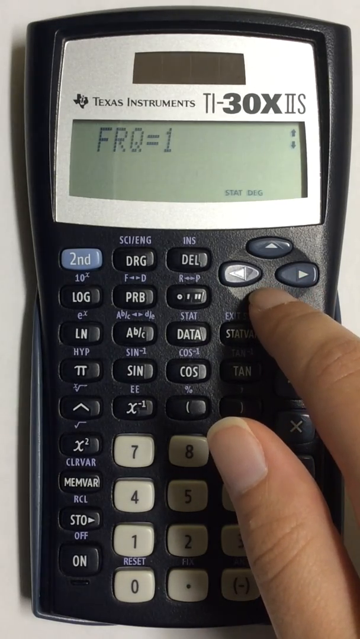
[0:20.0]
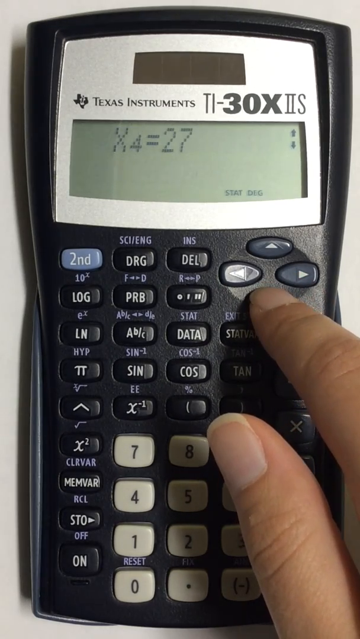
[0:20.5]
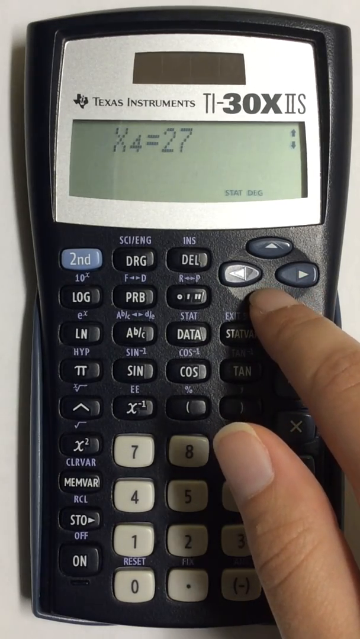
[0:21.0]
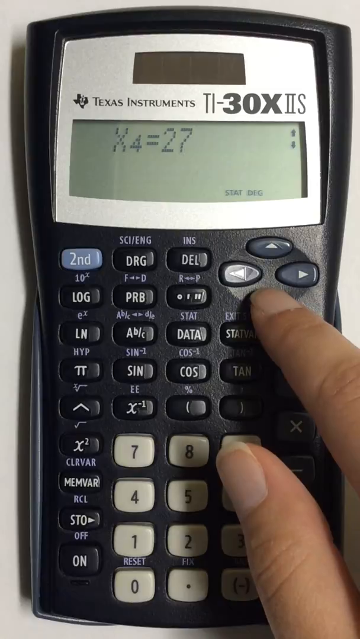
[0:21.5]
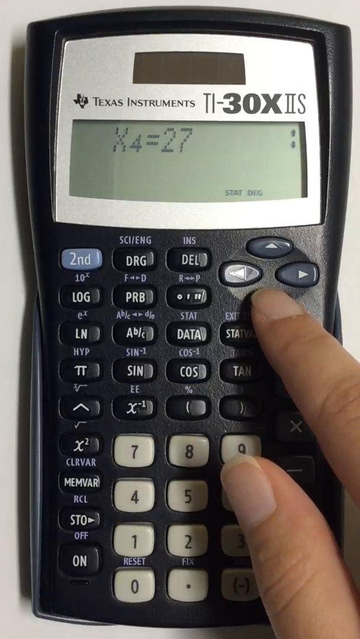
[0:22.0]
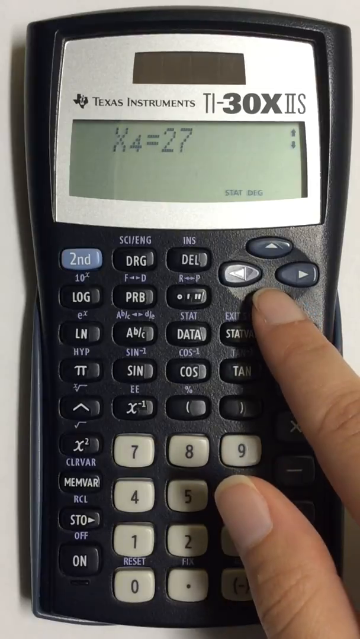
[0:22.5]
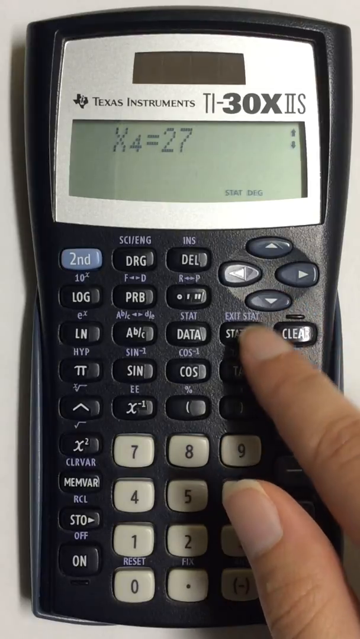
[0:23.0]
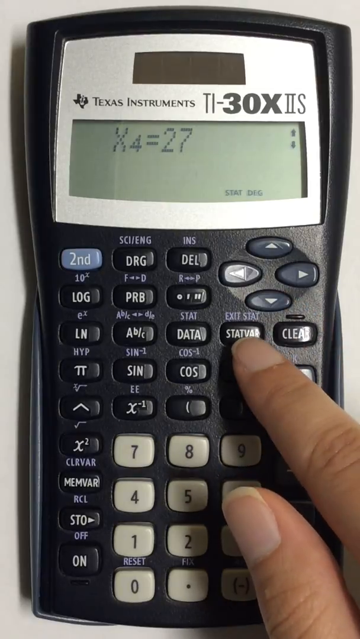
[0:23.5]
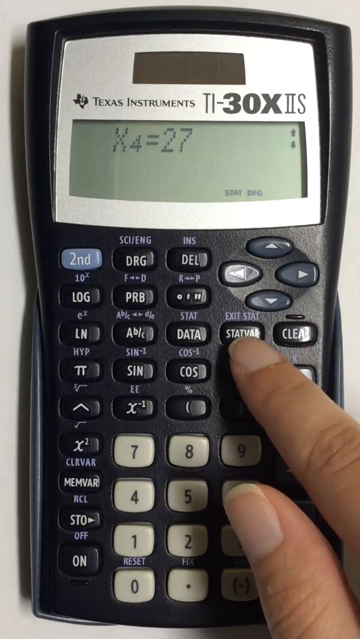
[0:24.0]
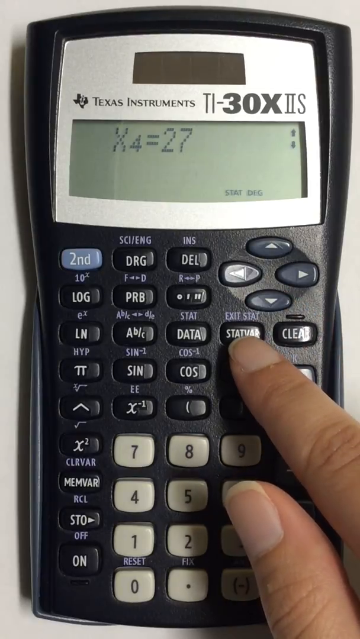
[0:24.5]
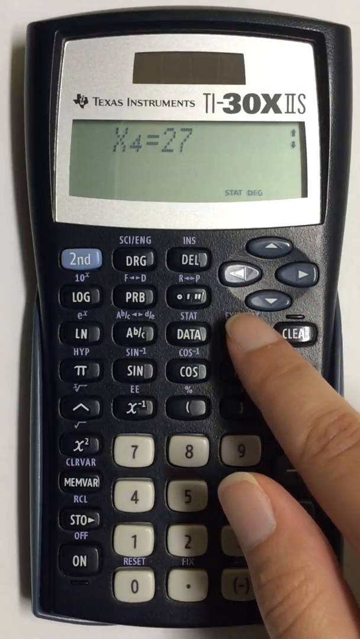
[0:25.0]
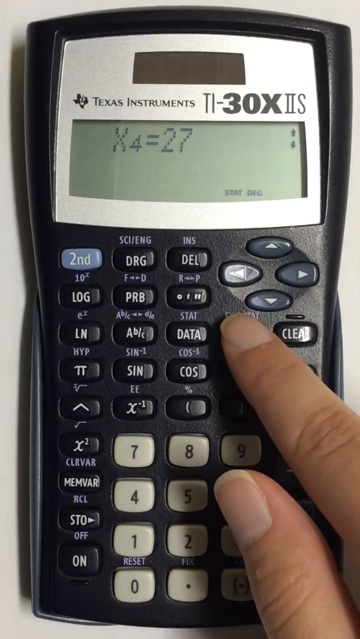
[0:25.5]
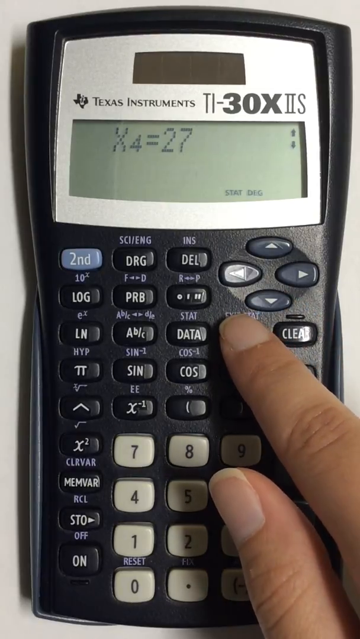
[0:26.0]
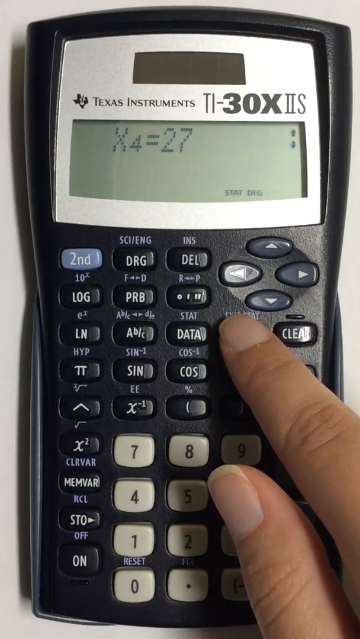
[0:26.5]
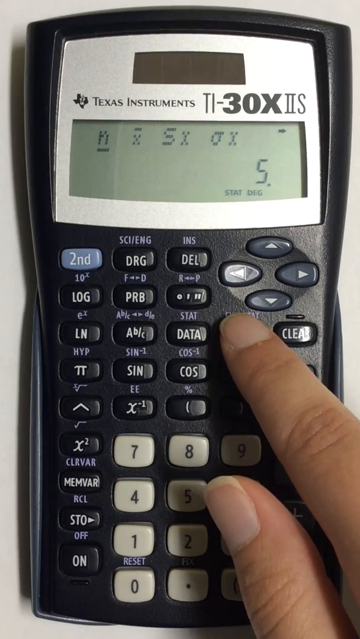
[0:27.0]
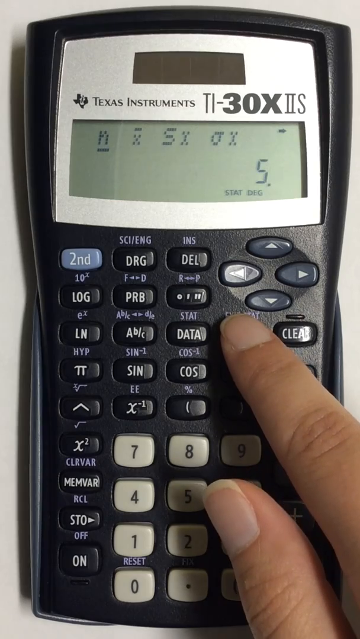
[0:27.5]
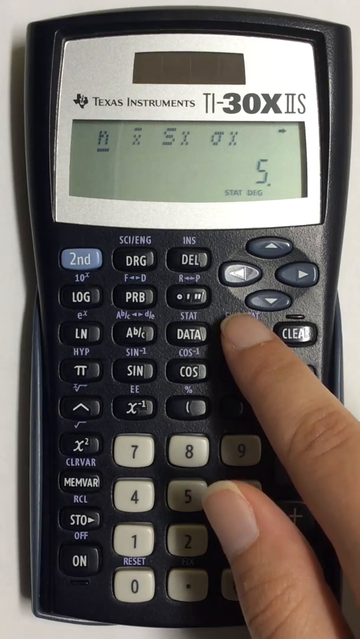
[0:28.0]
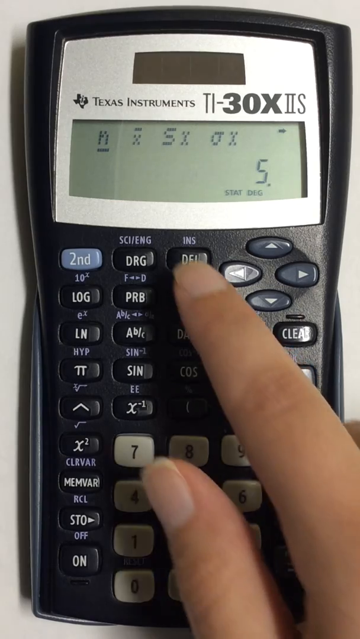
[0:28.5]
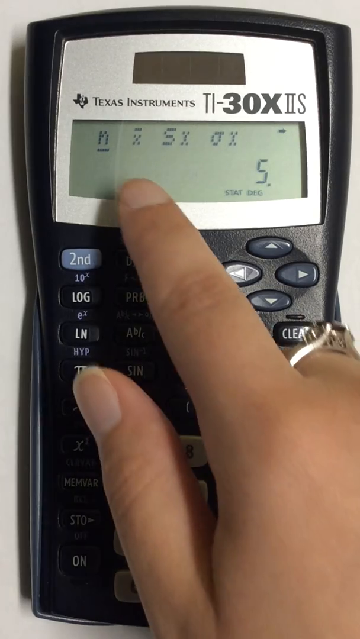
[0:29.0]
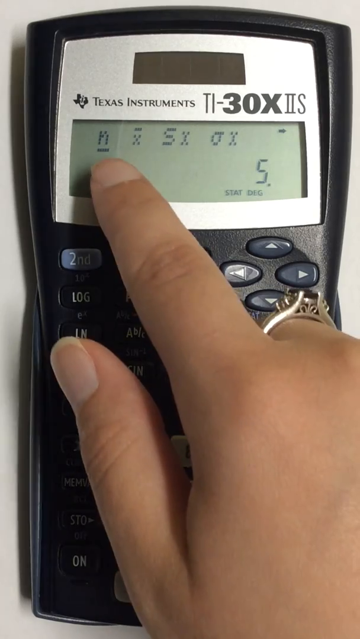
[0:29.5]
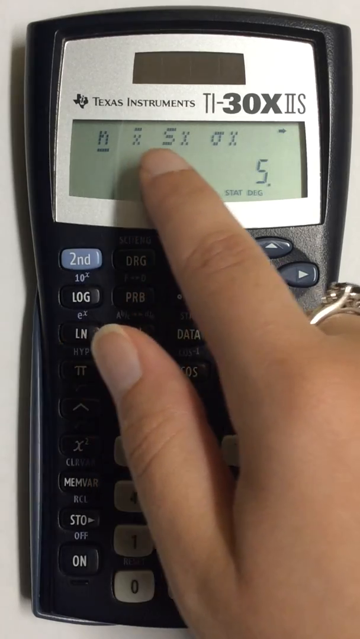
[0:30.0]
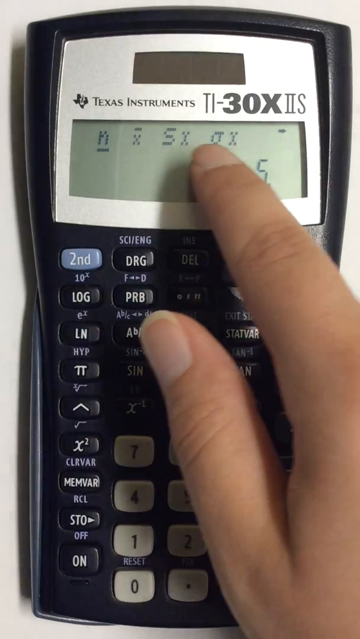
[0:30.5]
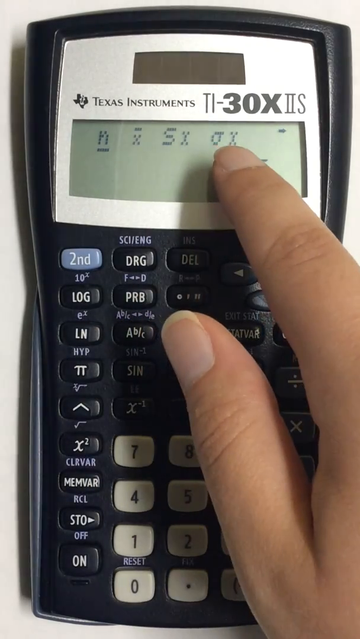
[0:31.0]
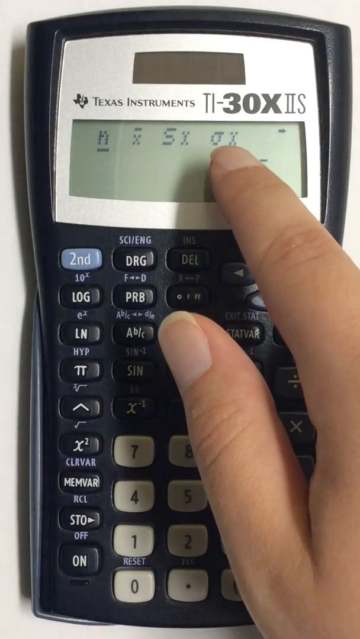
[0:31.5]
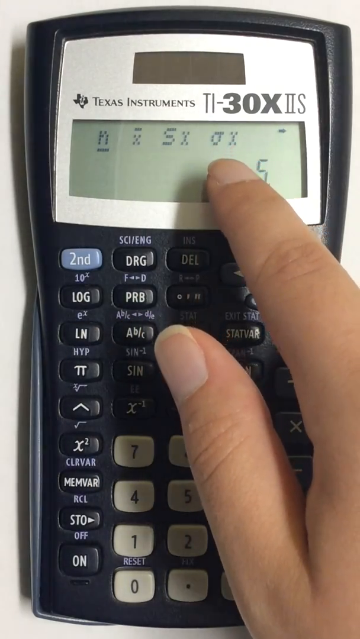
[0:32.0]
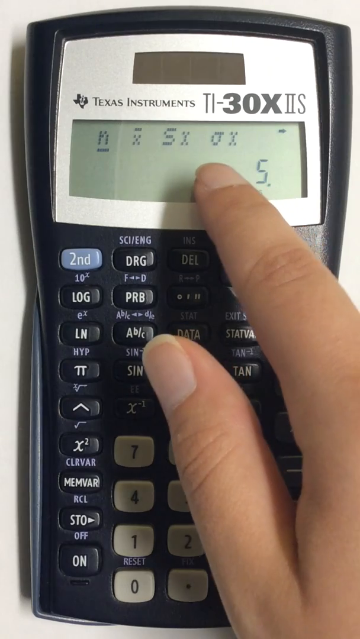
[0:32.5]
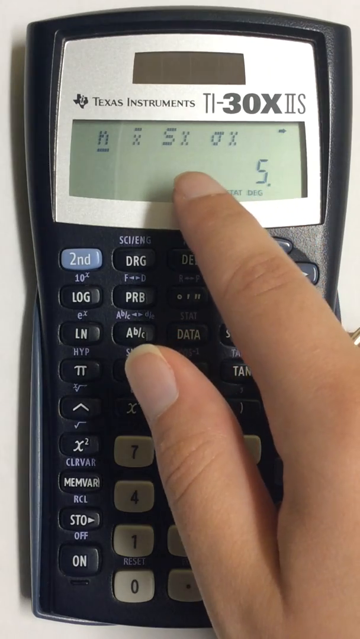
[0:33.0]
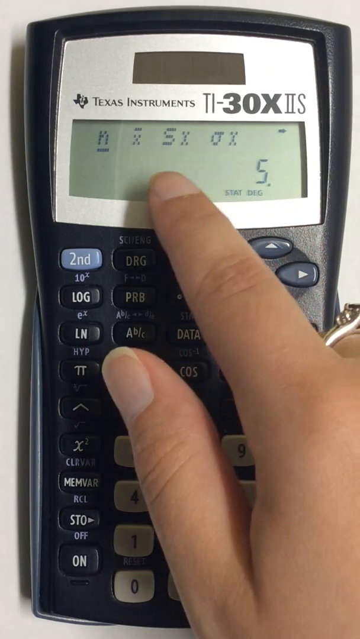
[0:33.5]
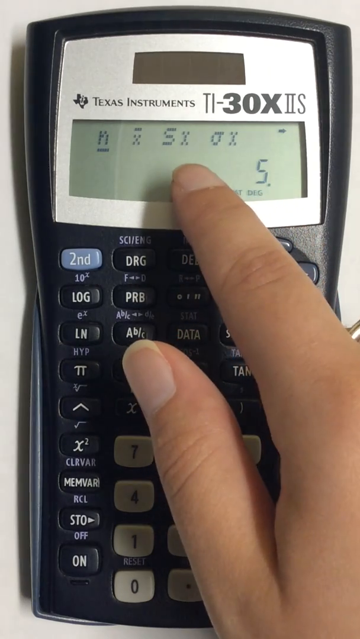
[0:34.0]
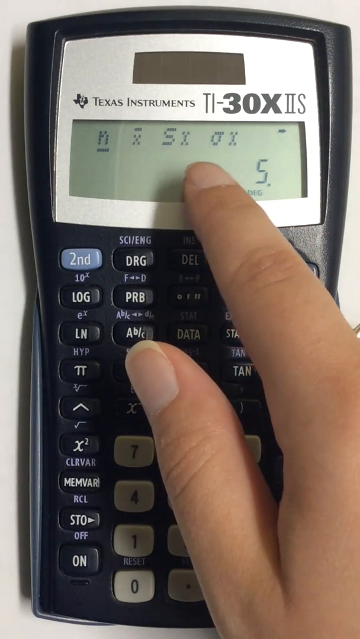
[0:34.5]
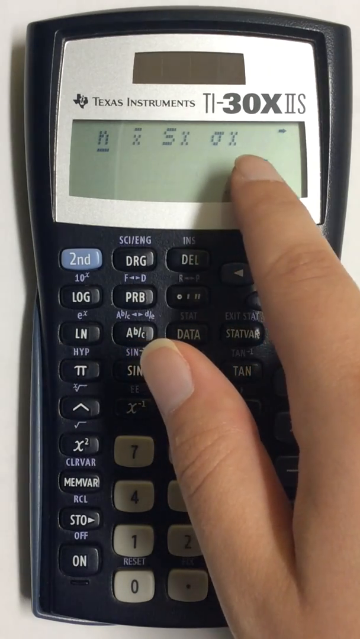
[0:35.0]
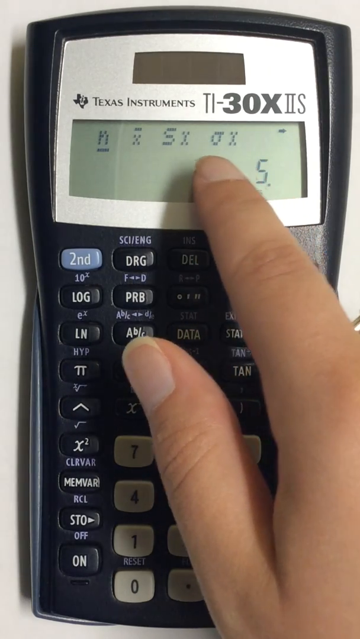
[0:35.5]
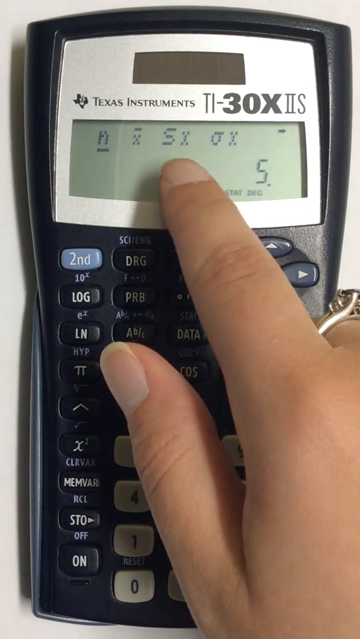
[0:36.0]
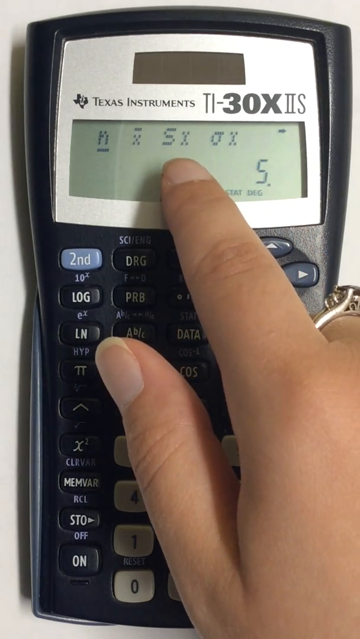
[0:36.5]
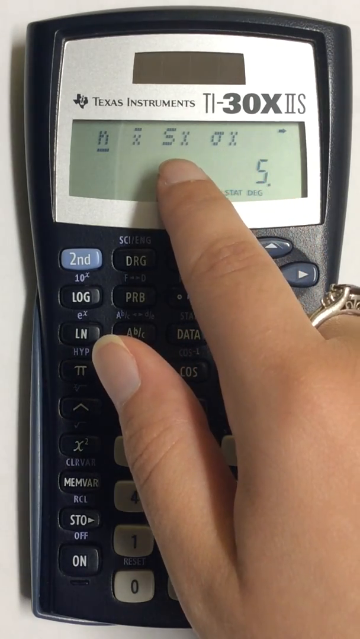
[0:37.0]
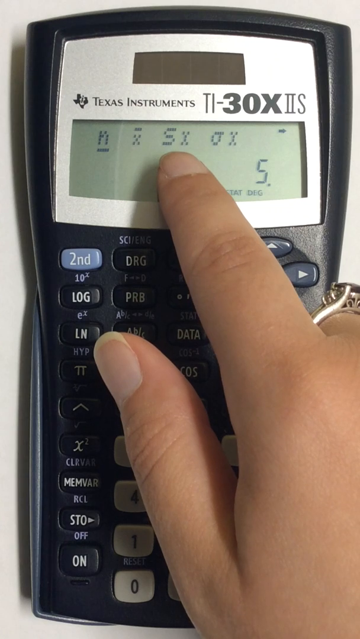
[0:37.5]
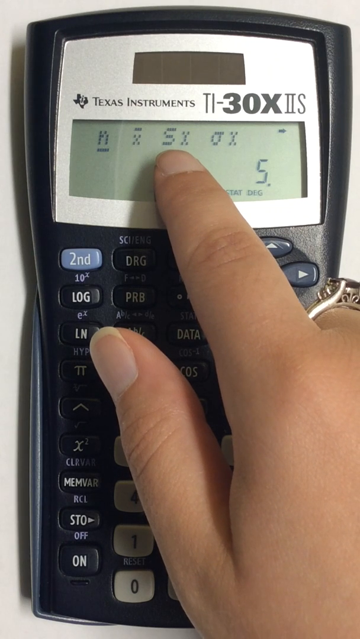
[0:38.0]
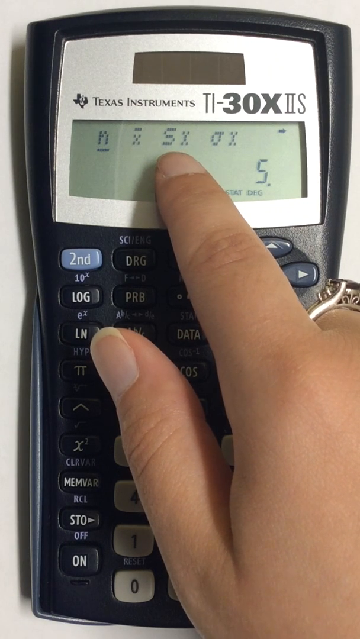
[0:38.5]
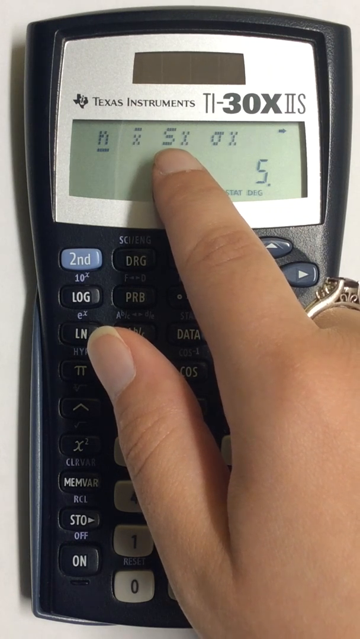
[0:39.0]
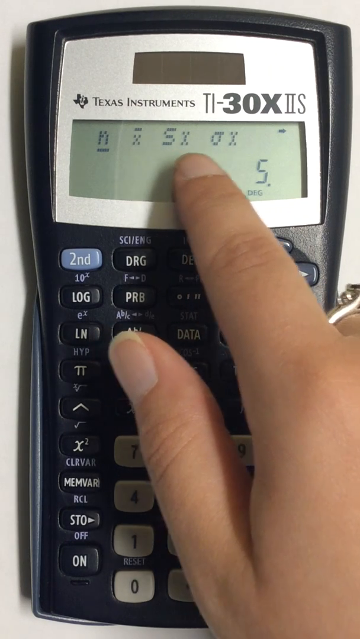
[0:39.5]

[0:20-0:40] A hand touches a dark blue Texas Instruments 30X2 calculator. It has a variety of blue and black buttons, a lighter blue button that says "second", and lighter gray buttons for the numbers 0 through 9. The display screen reads "FRQ = 1", and a finger pushes the down arrow button, bringing up "X4 = 27" on the display. The hand then moves to some of the other buttons and presses one, and some symbols appear on the screen along with the number 5. The person points to some of these symbols and numbers on the display.